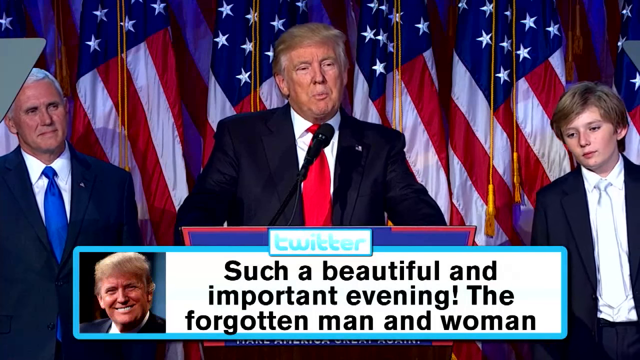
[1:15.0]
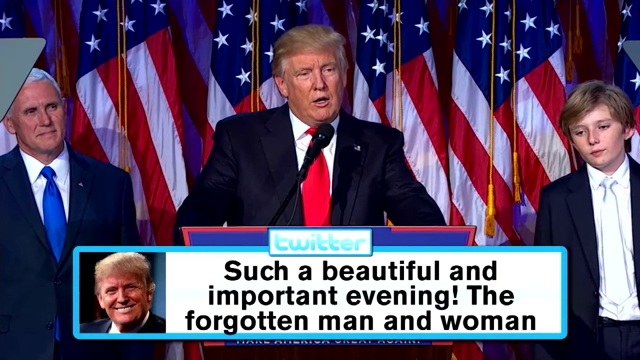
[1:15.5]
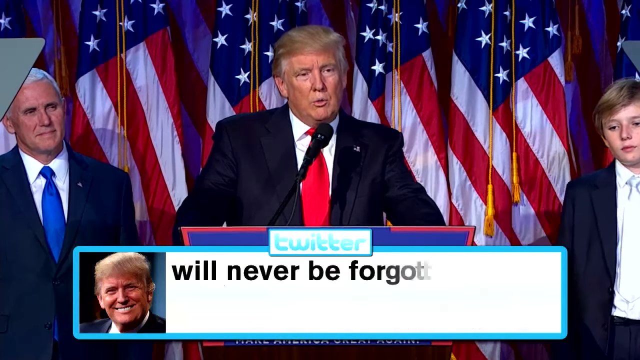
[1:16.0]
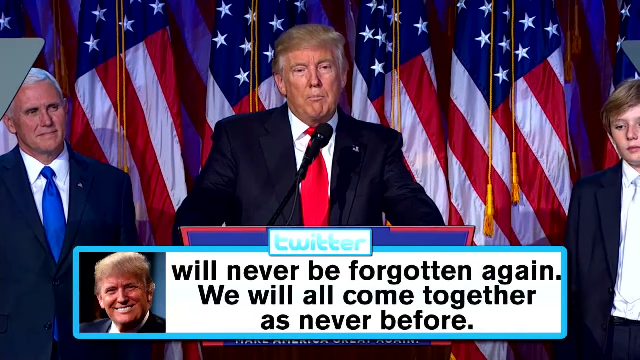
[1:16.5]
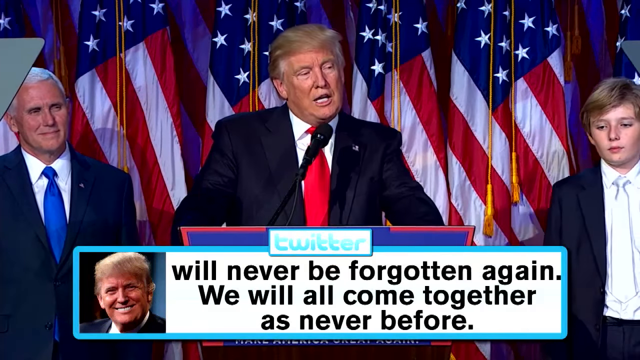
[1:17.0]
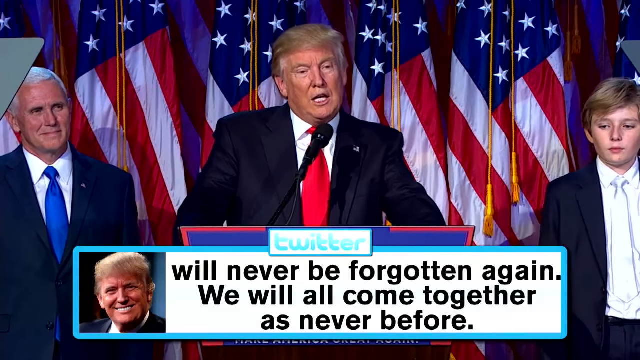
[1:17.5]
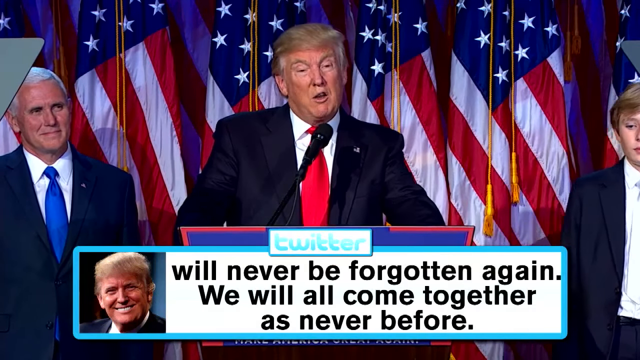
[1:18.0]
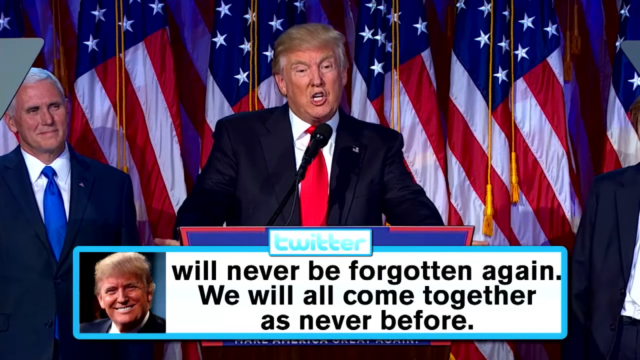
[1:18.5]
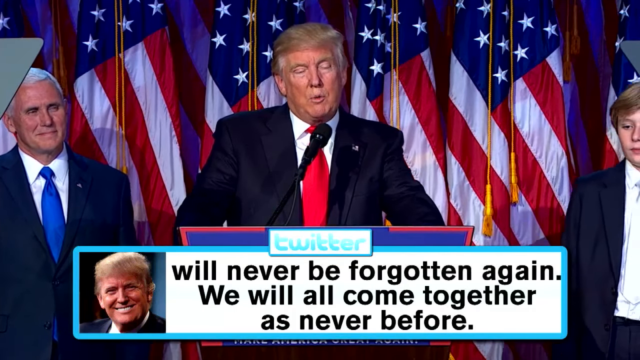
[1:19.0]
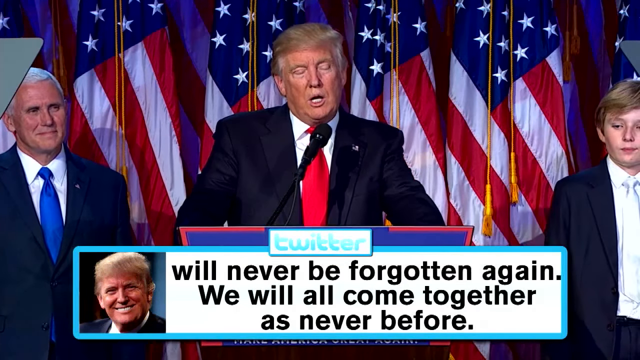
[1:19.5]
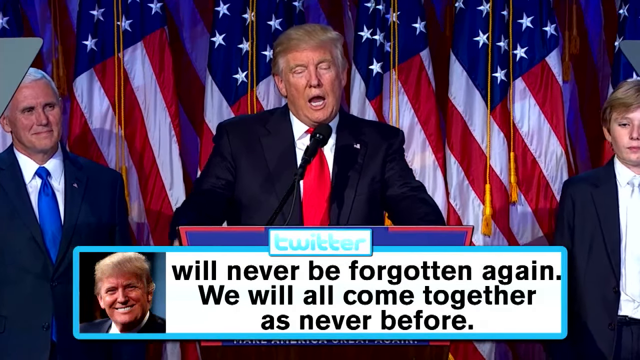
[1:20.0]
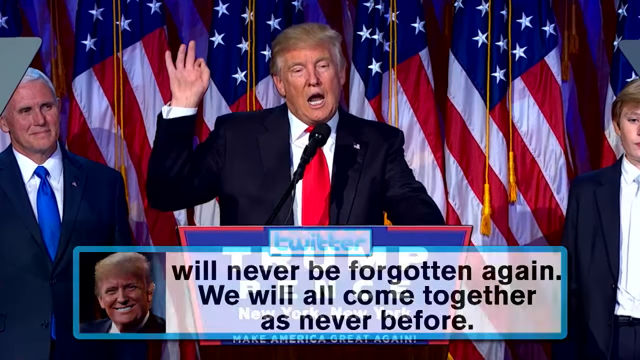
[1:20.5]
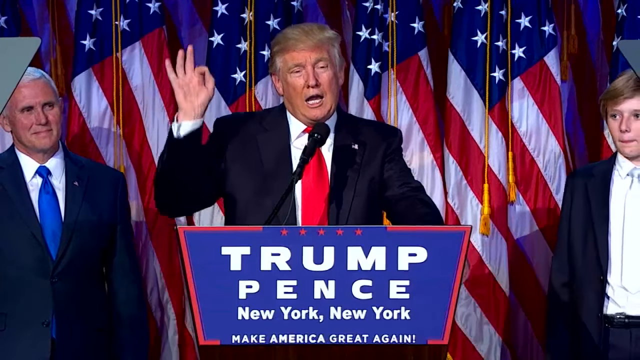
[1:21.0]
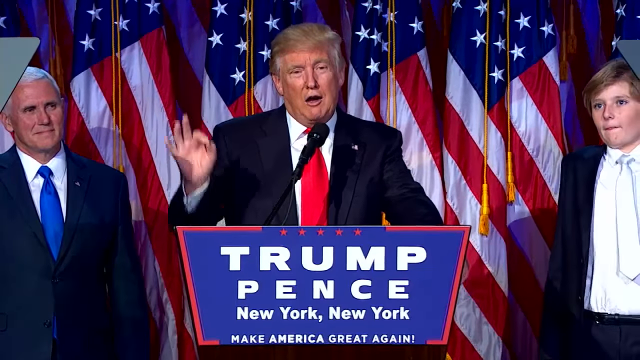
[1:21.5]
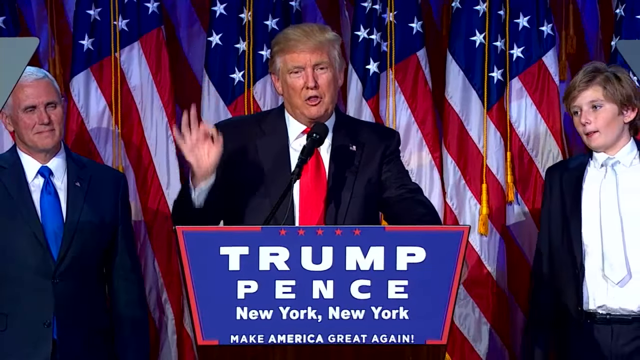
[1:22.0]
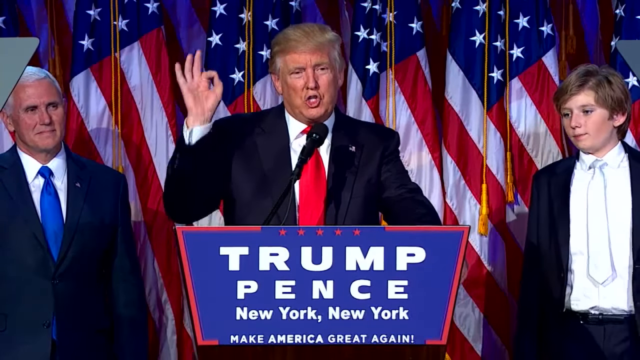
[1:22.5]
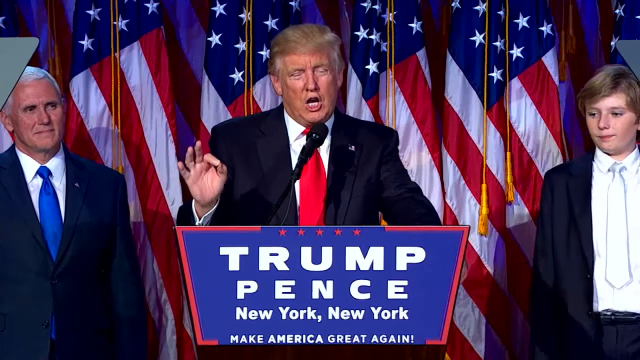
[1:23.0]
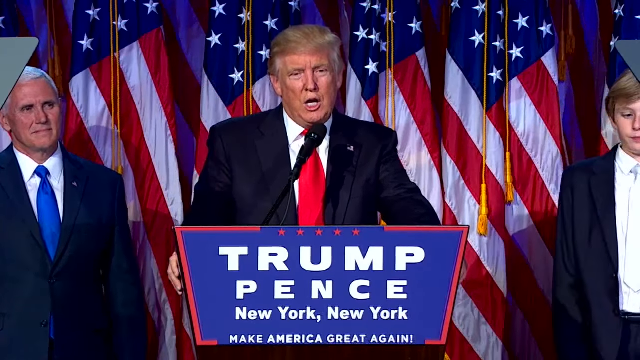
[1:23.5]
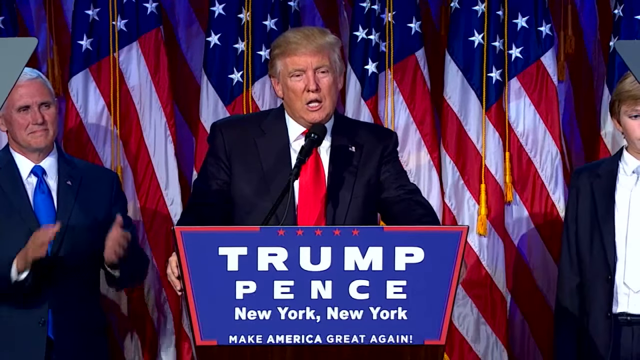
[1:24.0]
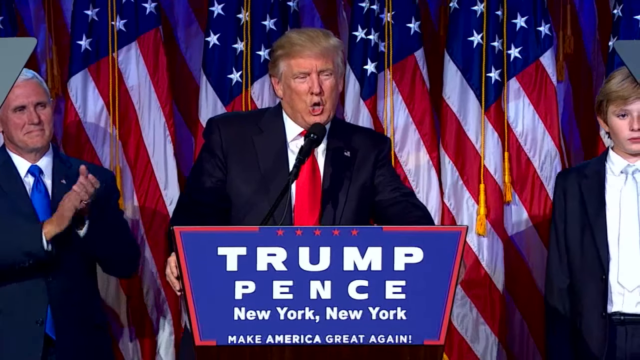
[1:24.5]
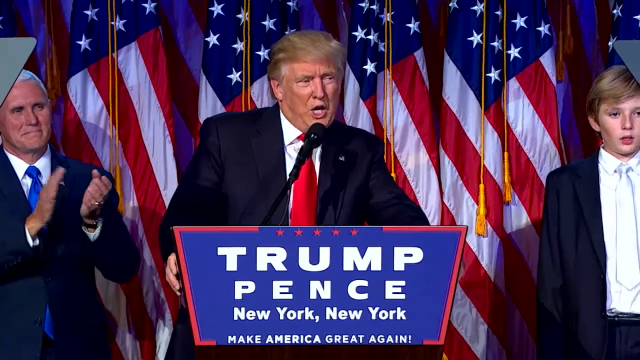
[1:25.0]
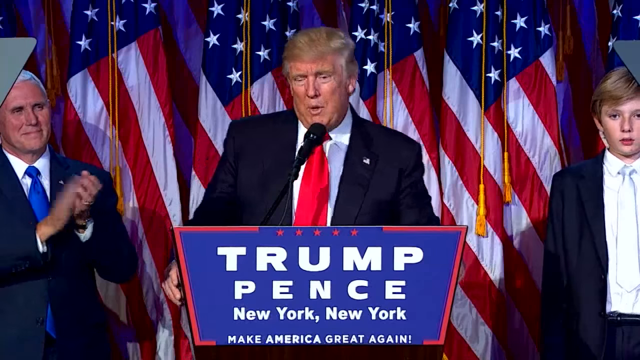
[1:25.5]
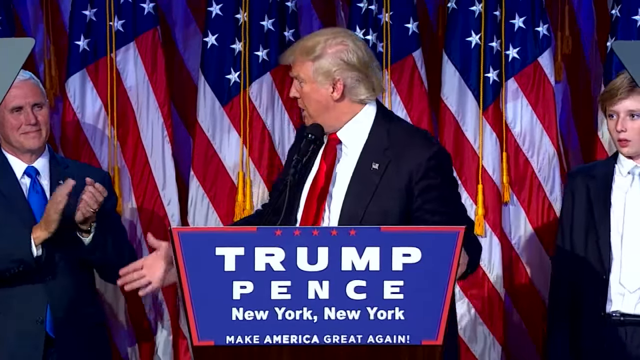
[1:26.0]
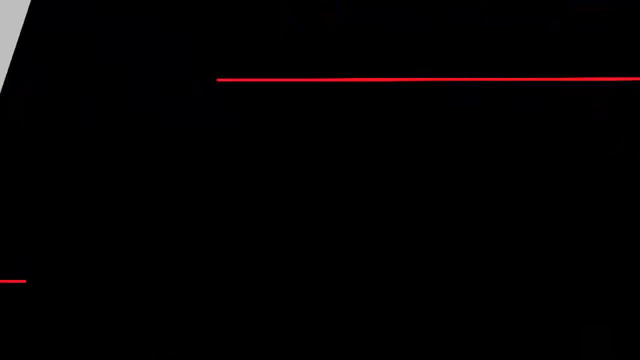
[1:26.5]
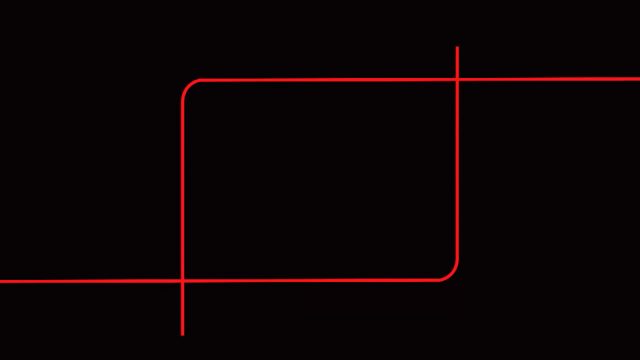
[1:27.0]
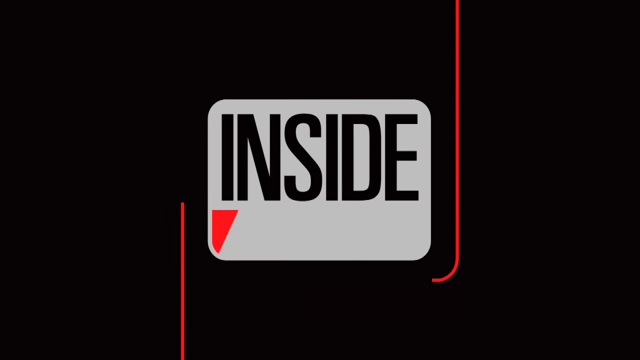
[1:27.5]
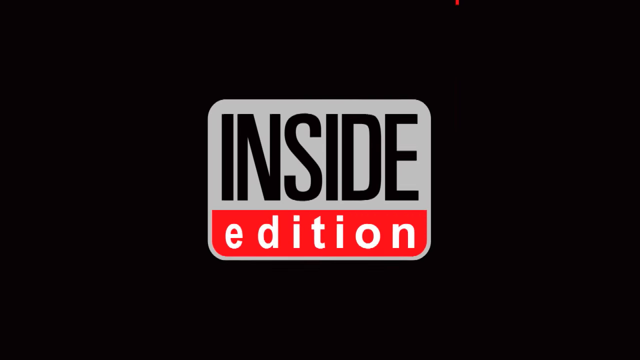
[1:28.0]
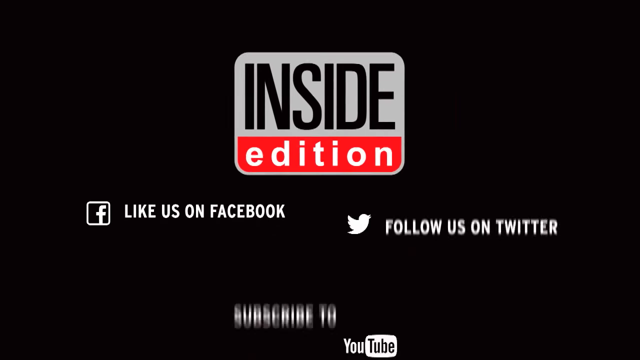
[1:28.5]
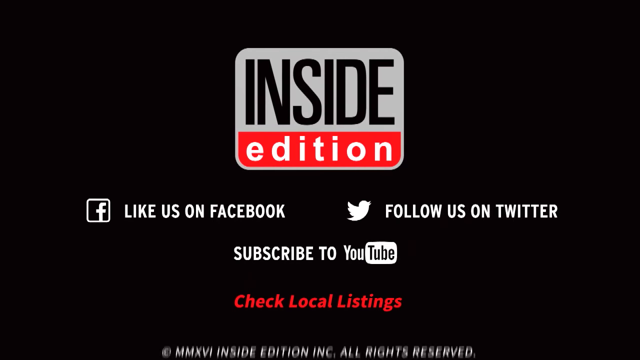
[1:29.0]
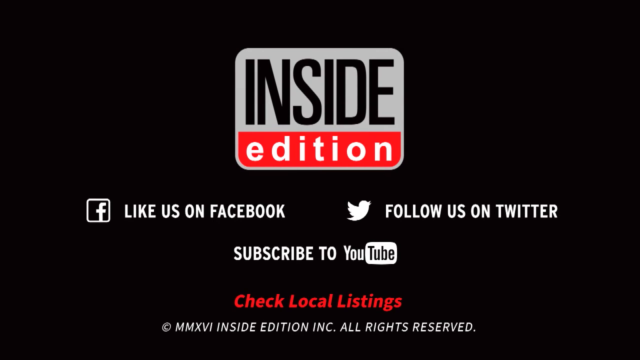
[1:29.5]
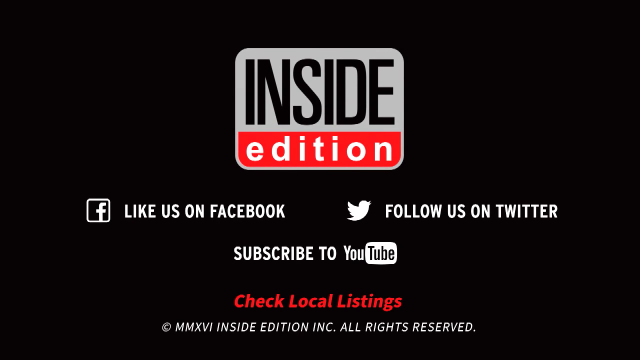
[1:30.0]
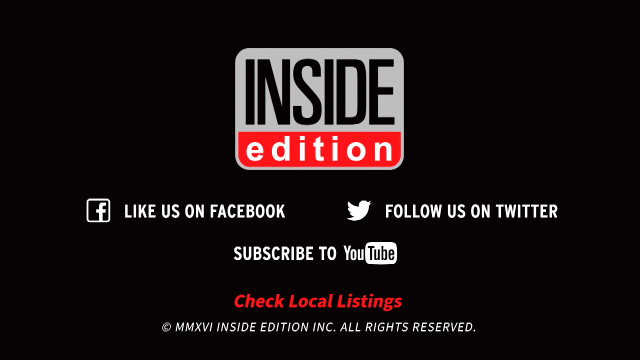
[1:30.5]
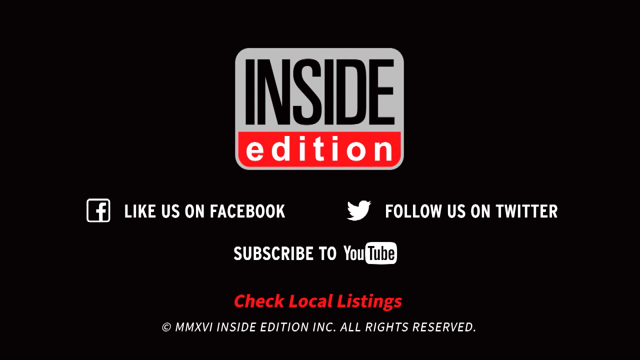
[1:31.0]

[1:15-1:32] Trump speaks behind the podium toward the camera, in what looks like his winning speech. His vice president is in the background to one side, his son is on the other side, and a number of American flags are draped behind him. Trump's hands are animated as he makes gestures. The front of the podium has a sign reading "Trump, Pence, New York, New York, make America great again." Pence starts clapping behind him. The video then ends with a graphic for Inside Edition along with its social media handles.